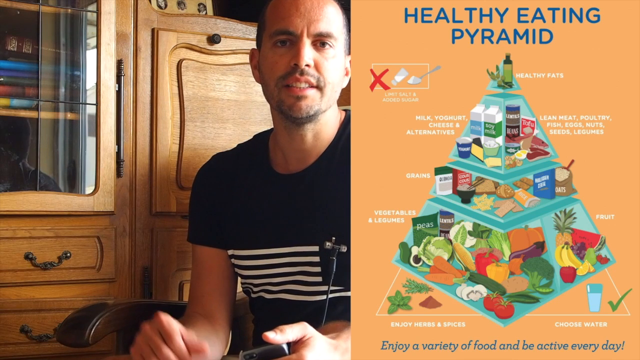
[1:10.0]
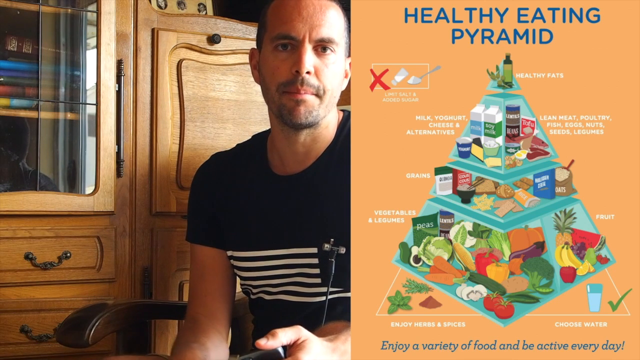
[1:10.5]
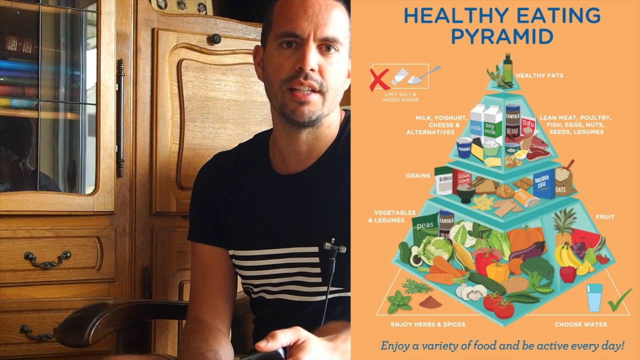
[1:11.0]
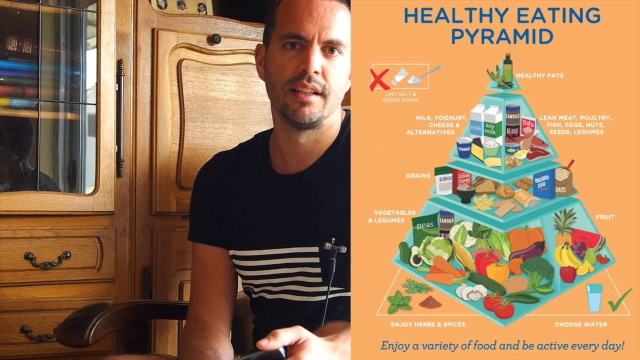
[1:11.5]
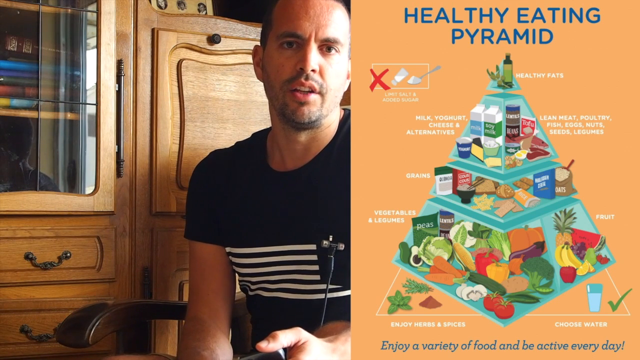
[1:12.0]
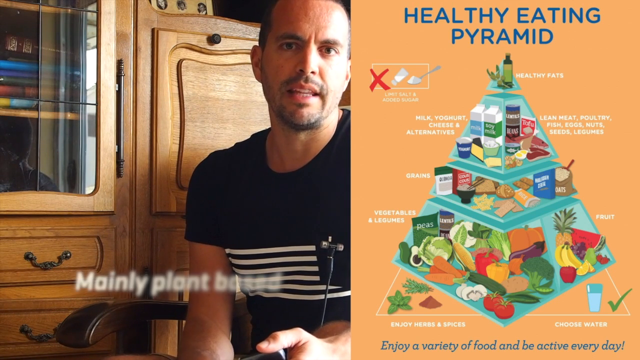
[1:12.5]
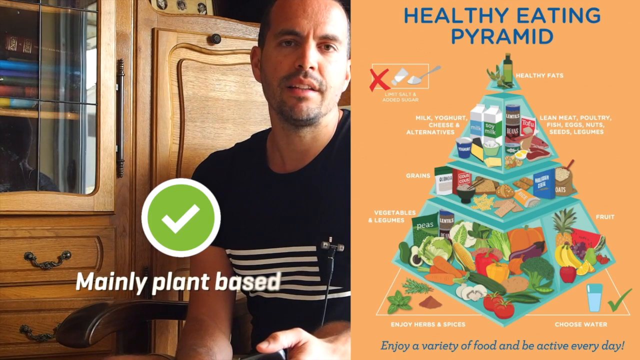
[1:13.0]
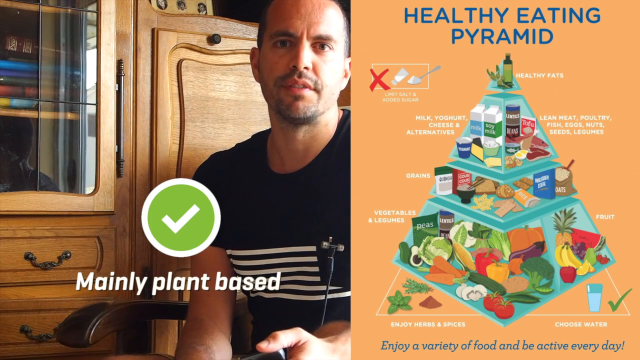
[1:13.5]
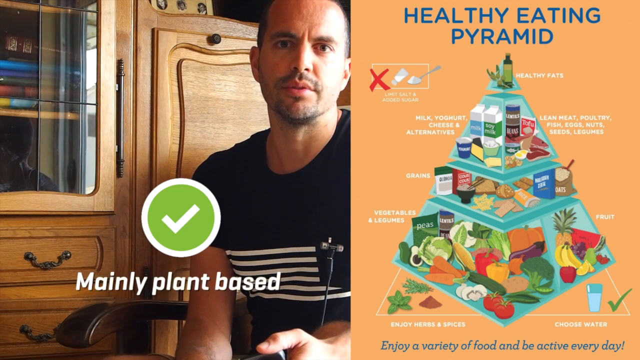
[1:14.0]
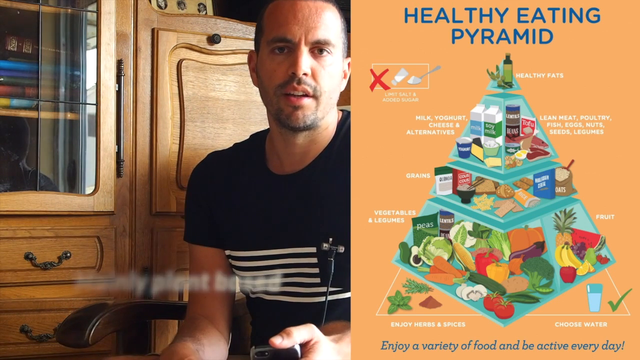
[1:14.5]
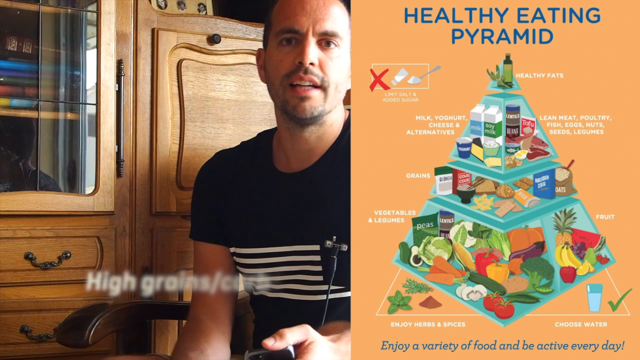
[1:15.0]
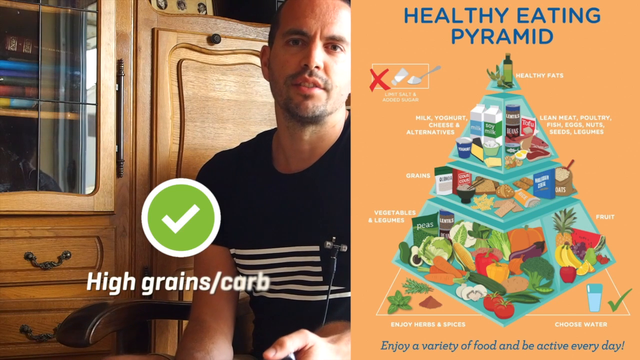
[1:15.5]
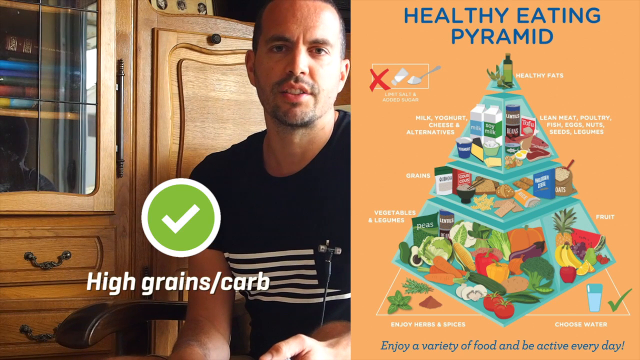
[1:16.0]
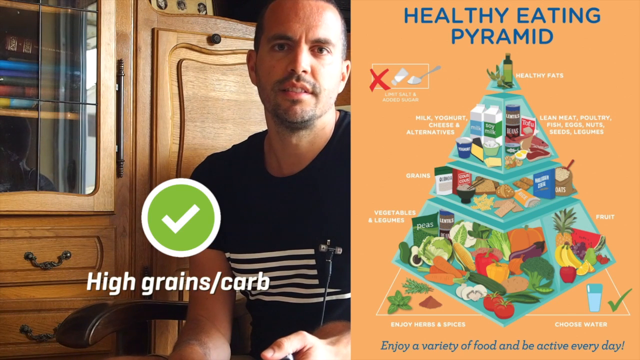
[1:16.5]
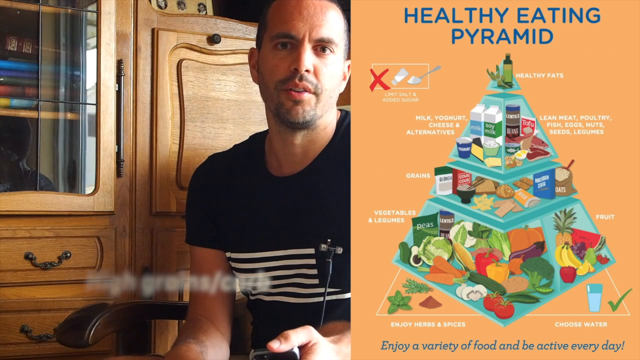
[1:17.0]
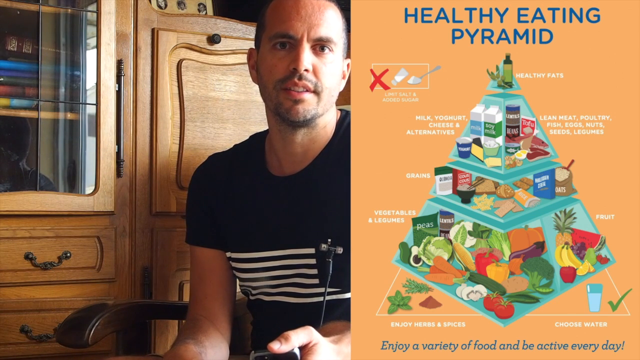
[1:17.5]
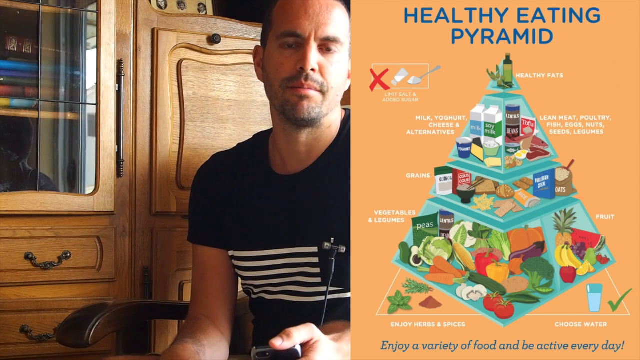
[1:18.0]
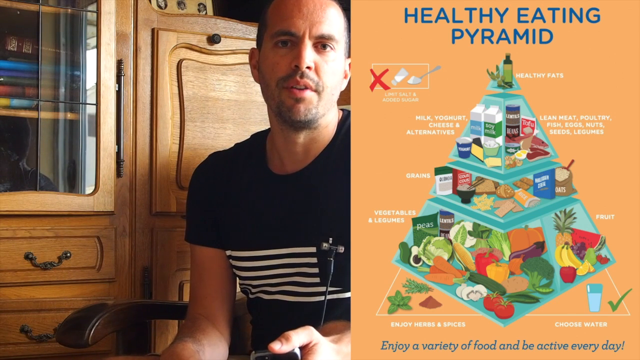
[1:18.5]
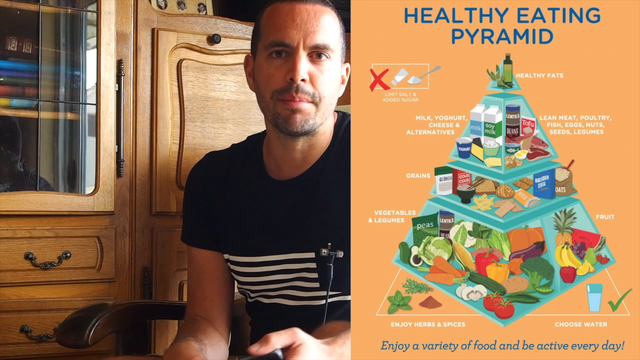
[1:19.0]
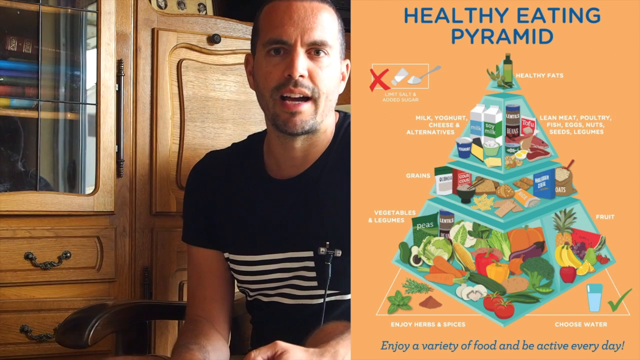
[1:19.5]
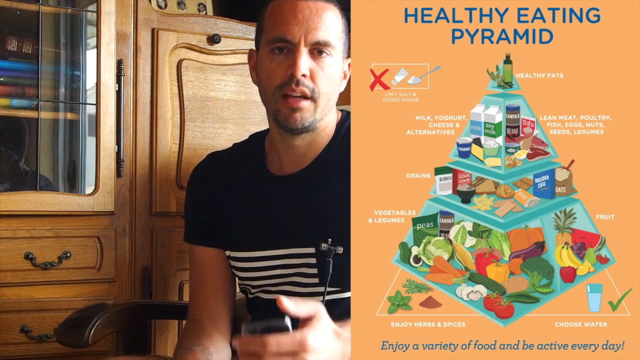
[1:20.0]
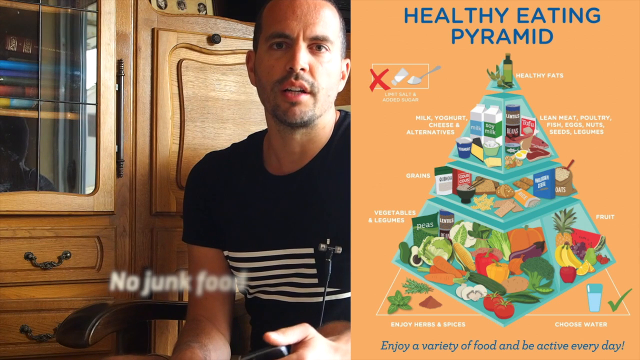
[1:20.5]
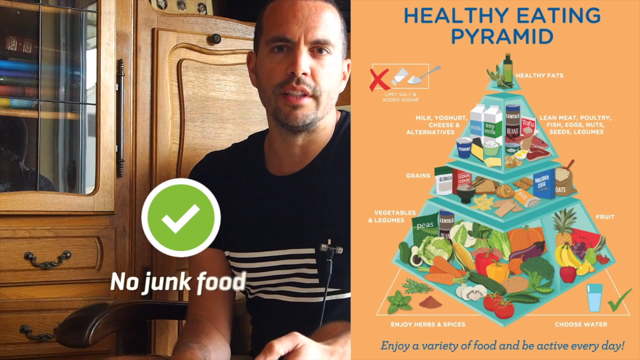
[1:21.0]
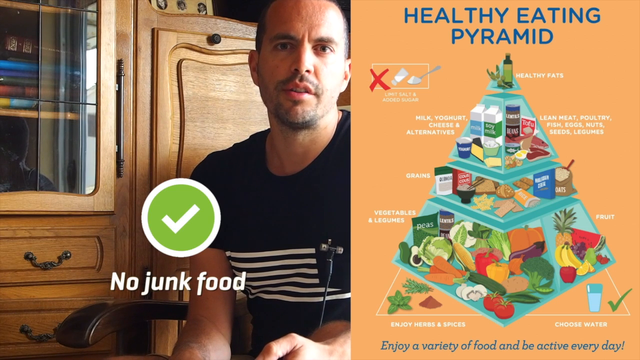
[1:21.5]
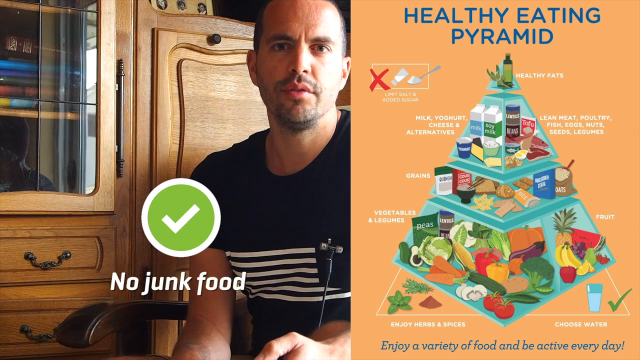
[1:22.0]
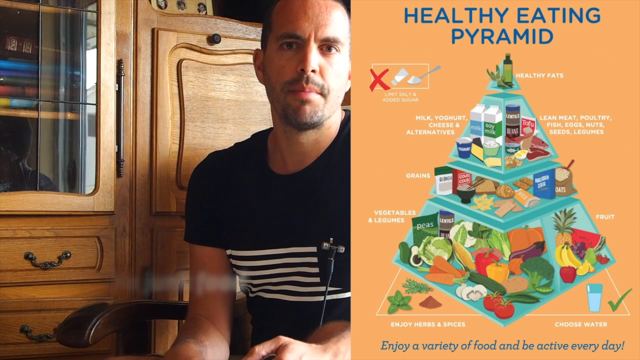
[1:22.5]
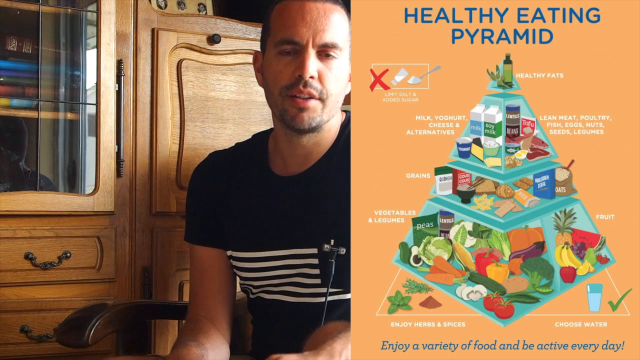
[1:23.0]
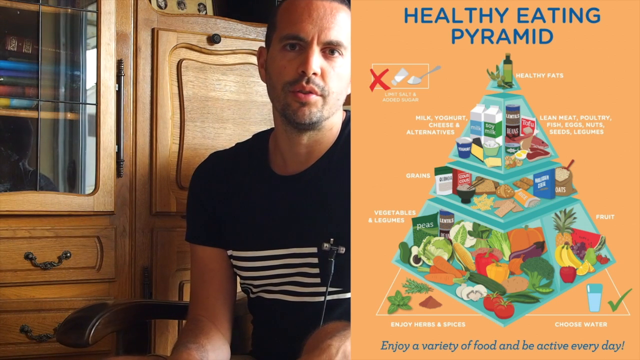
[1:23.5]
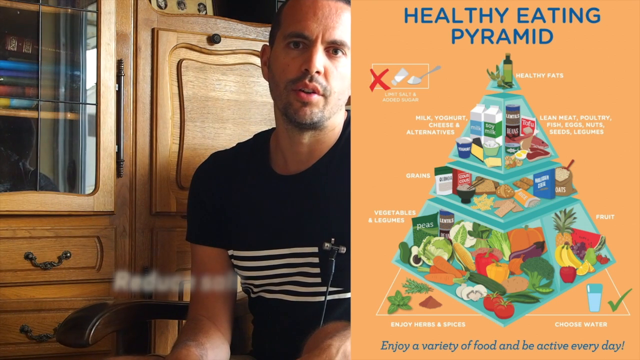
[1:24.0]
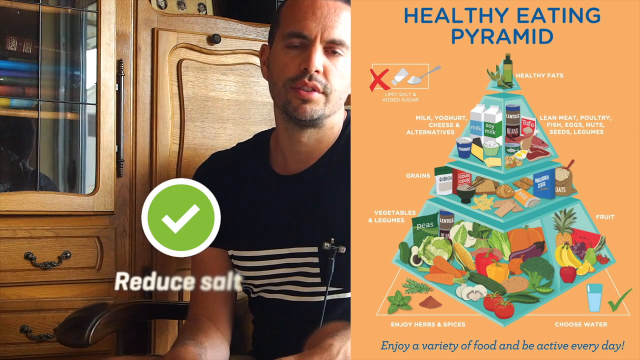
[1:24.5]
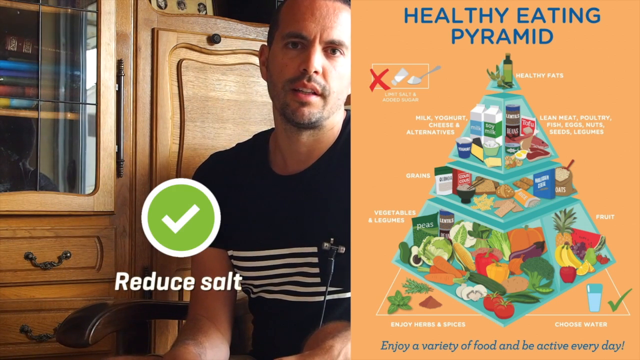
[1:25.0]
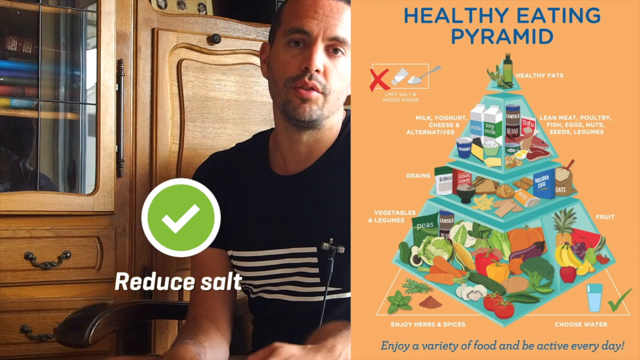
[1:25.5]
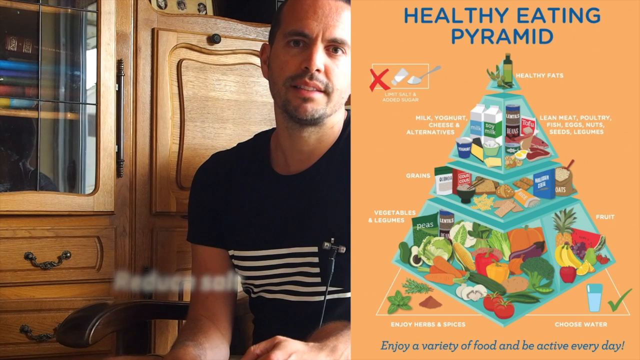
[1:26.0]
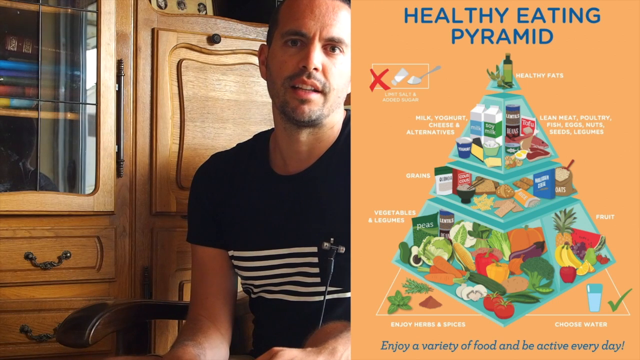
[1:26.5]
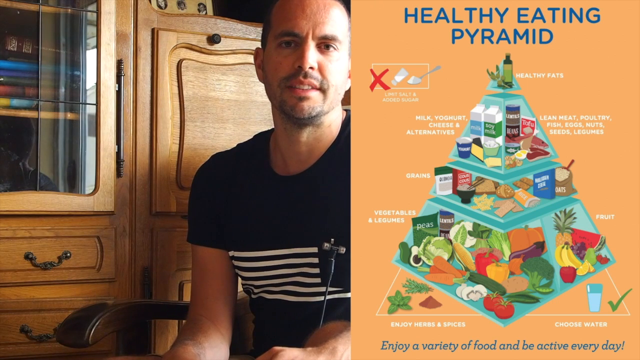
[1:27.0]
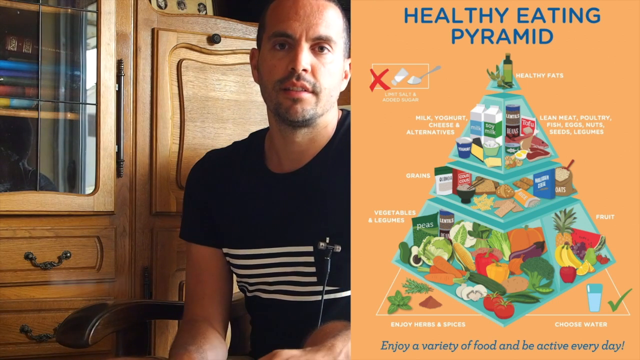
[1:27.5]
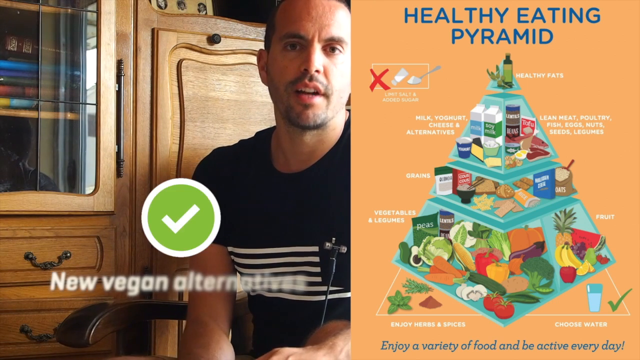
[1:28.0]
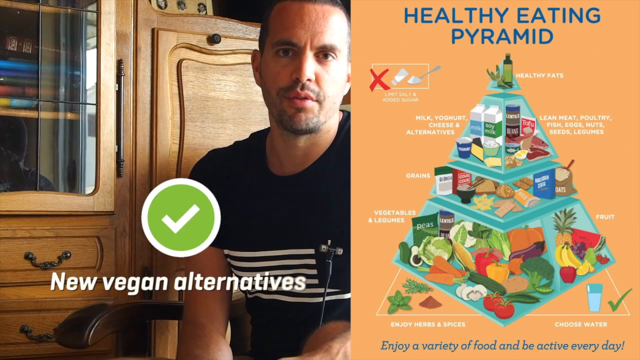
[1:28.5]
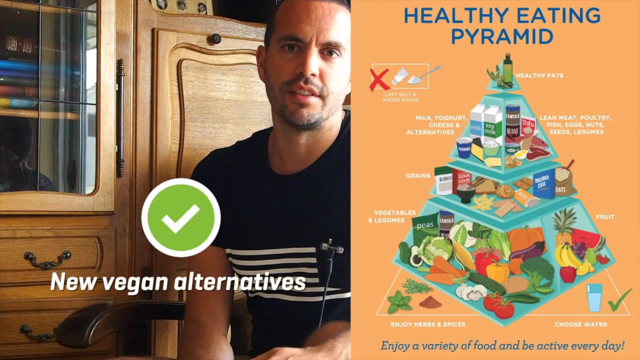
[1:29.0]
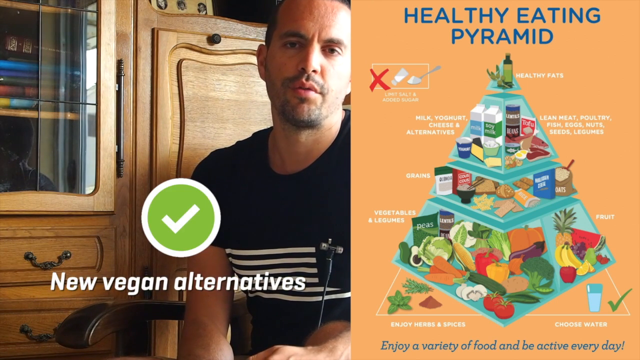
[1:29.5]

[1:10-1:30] A split screen shows the man in the white chair speaking to the camera on the left and the healthy eating pyramid on the right. A green circle with a white check mark inside and a white outline appears in front of the man, with "mainly plant-based" underneath in white. That disappears, and the green circle with the check mark reappears with "high grains/carb" underneath. The green circle with the check mark appears again with "no junk food" underneath in white, then again with "reduce salt", and then again, with its white border and white check mark, with "new vegan alternatives" underneath in white. The man continues to talk throughout this.